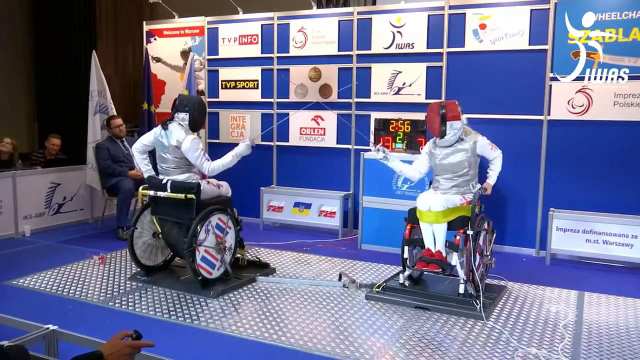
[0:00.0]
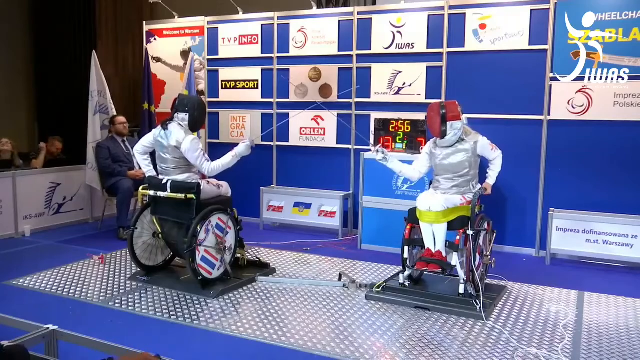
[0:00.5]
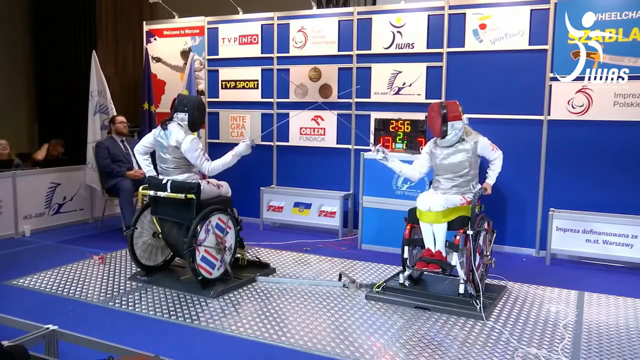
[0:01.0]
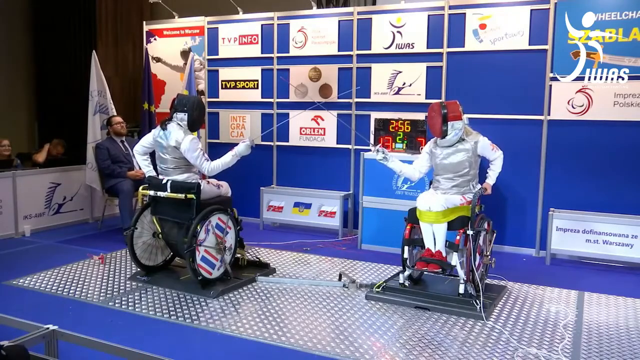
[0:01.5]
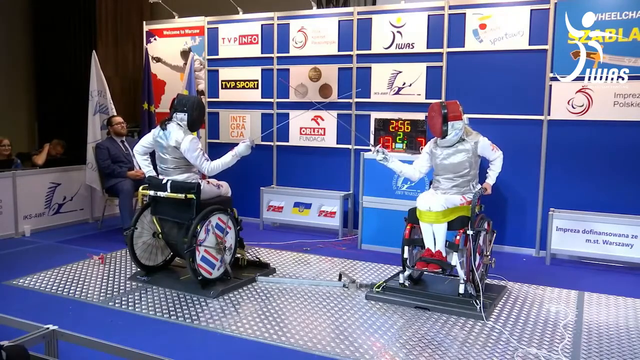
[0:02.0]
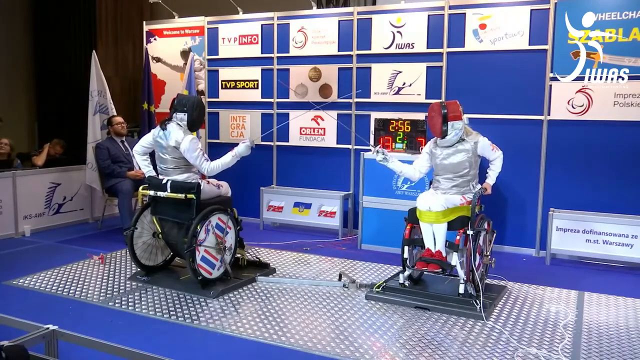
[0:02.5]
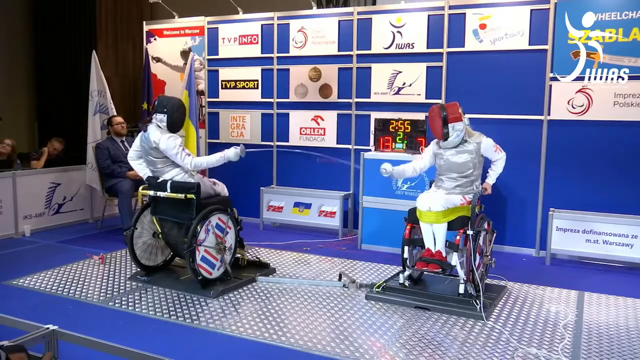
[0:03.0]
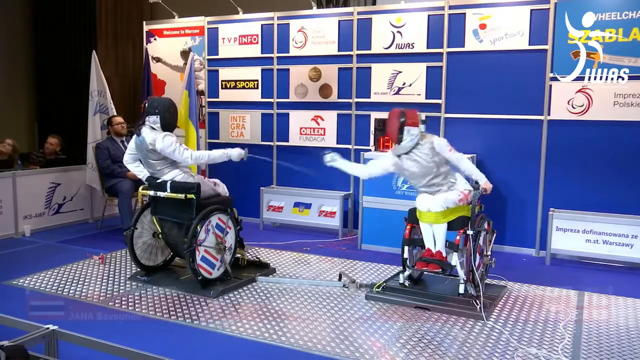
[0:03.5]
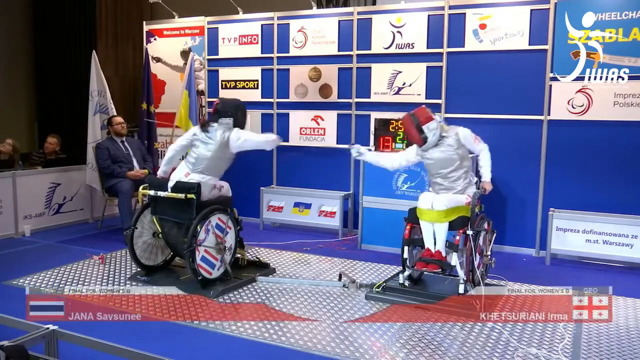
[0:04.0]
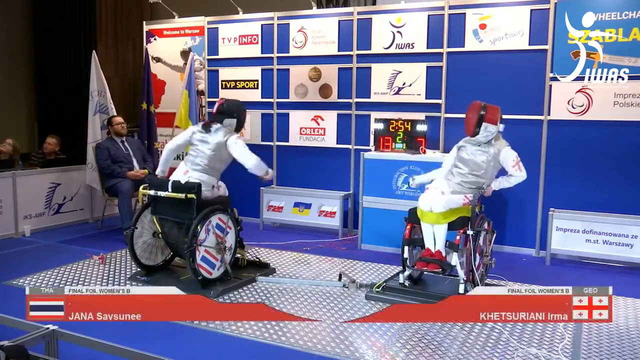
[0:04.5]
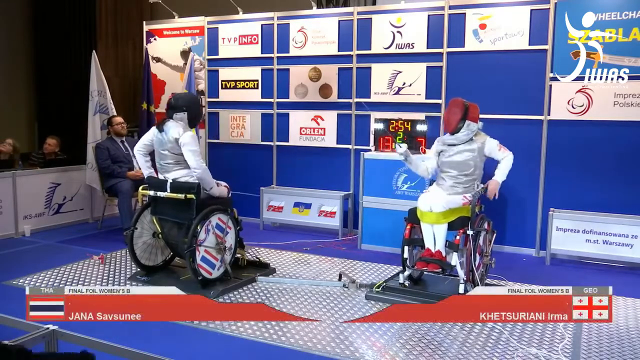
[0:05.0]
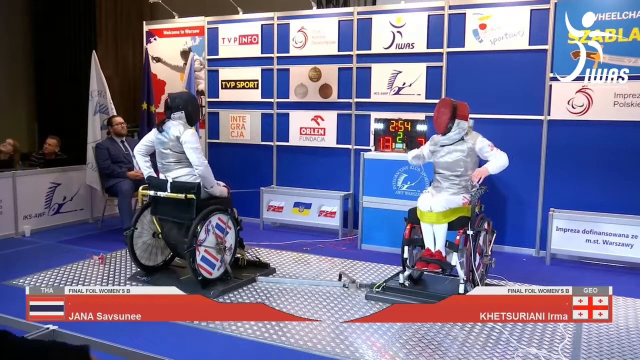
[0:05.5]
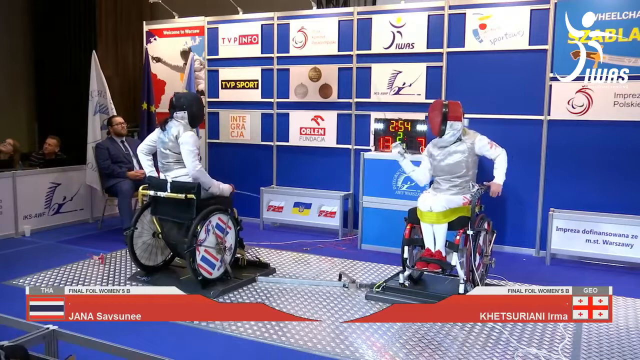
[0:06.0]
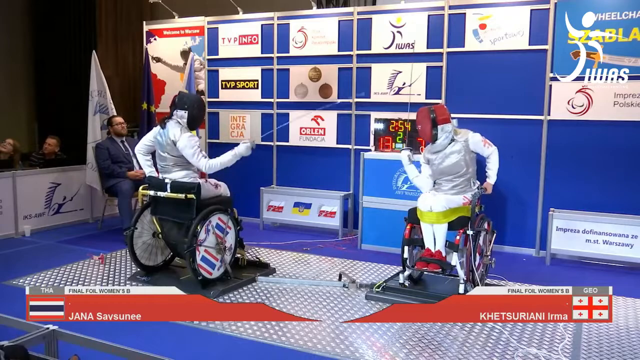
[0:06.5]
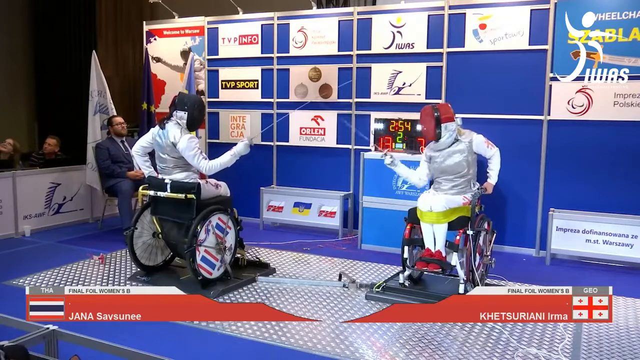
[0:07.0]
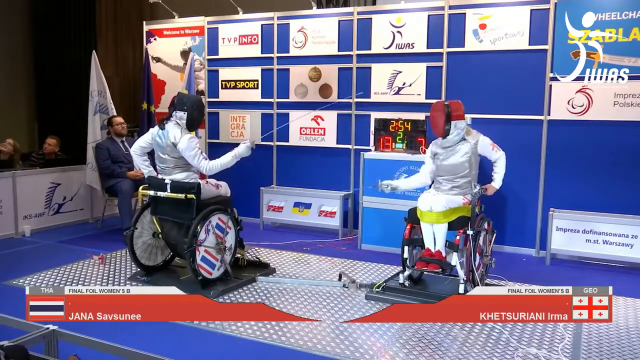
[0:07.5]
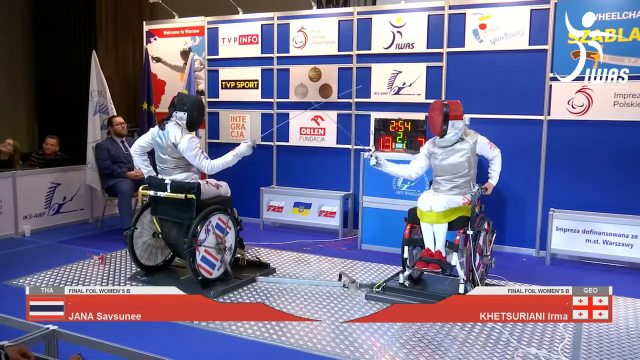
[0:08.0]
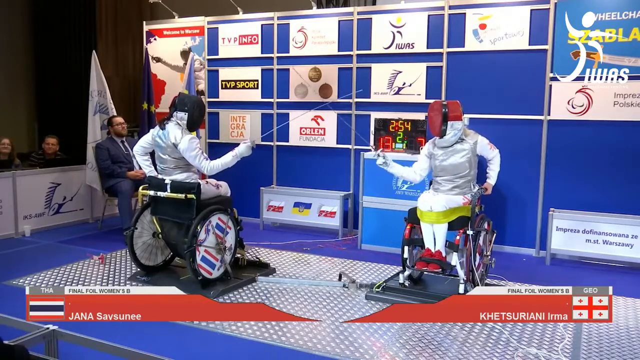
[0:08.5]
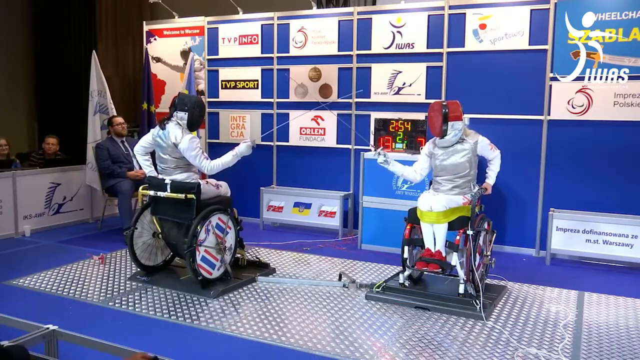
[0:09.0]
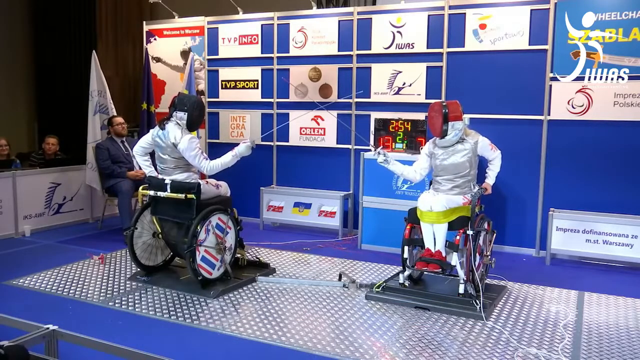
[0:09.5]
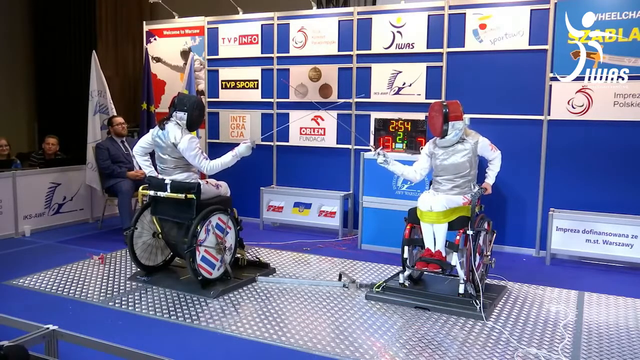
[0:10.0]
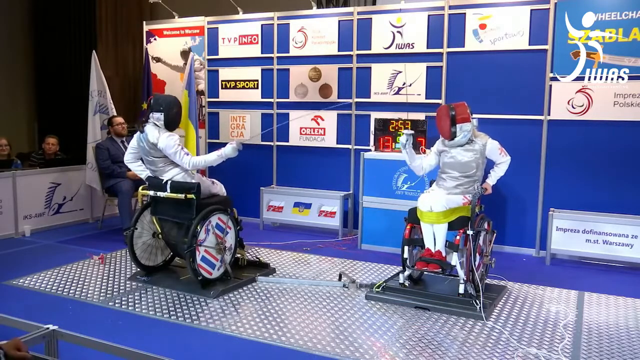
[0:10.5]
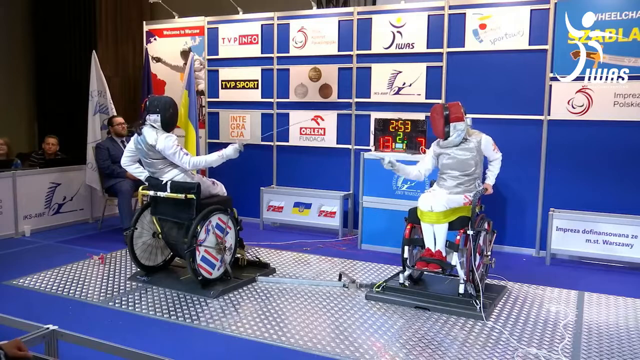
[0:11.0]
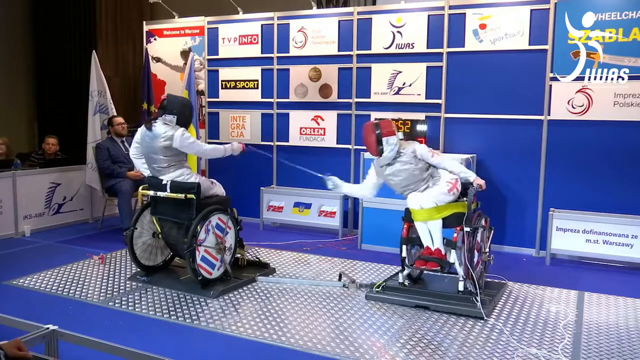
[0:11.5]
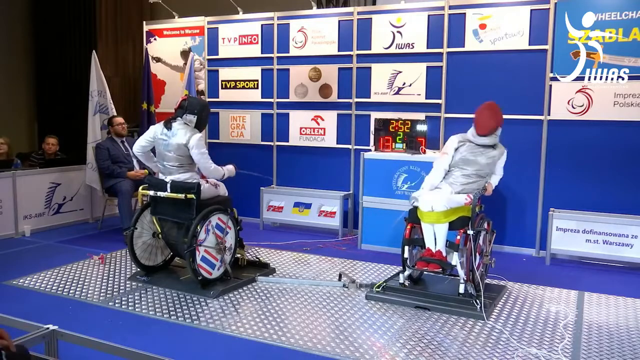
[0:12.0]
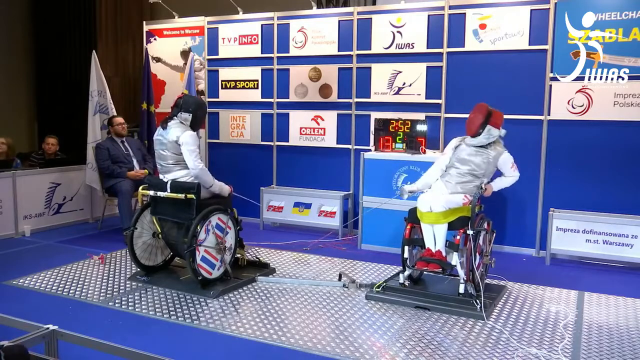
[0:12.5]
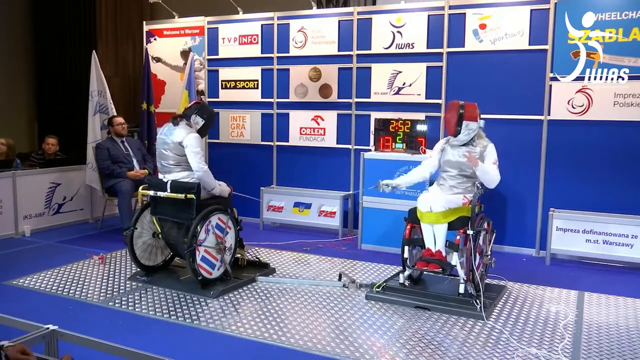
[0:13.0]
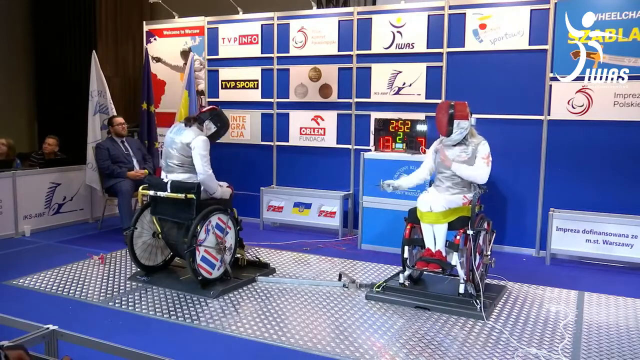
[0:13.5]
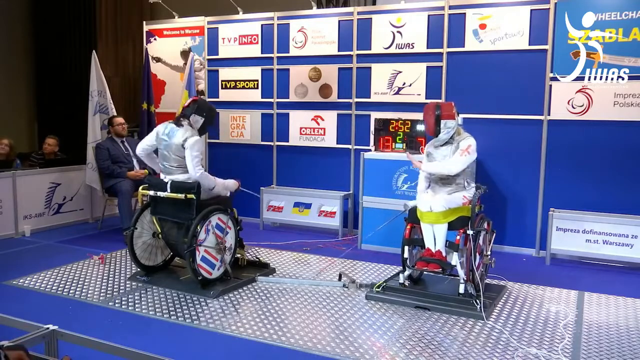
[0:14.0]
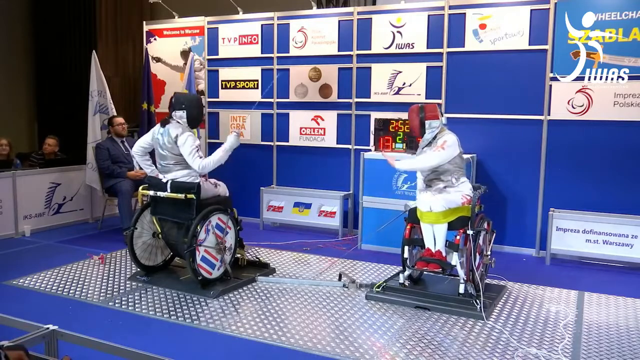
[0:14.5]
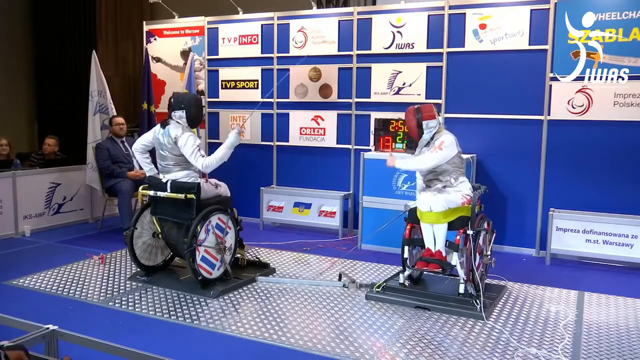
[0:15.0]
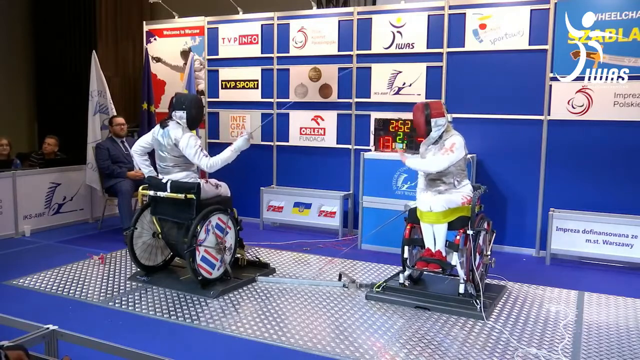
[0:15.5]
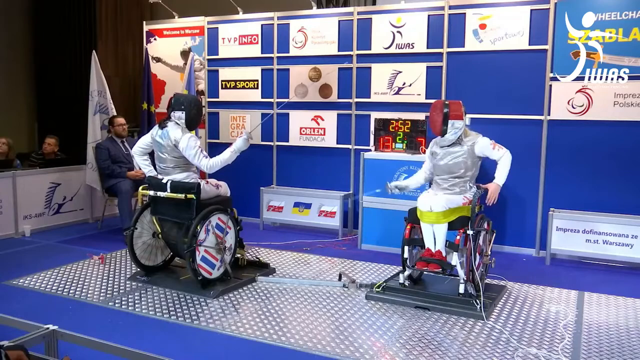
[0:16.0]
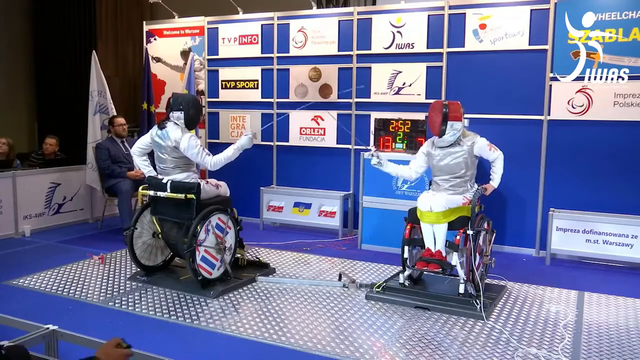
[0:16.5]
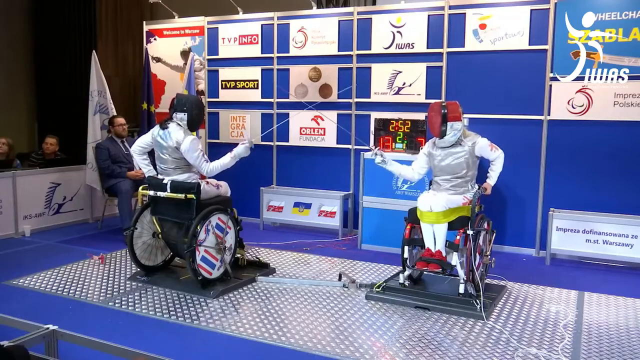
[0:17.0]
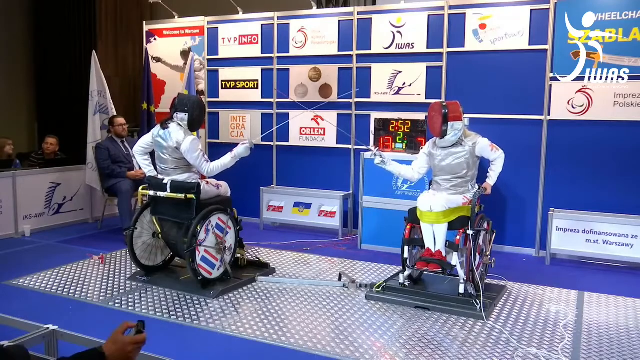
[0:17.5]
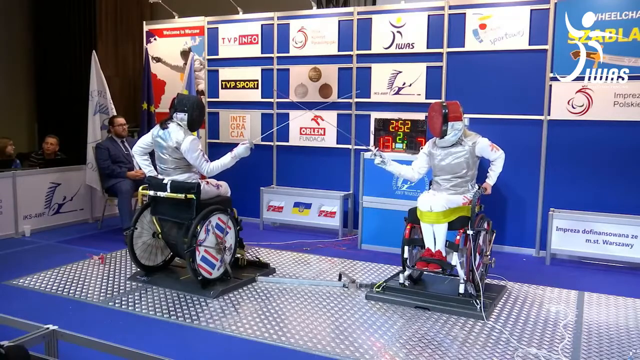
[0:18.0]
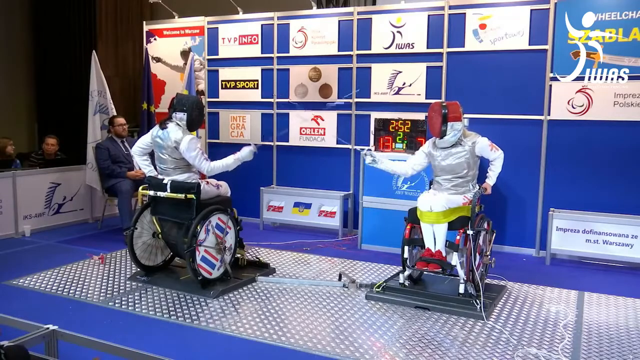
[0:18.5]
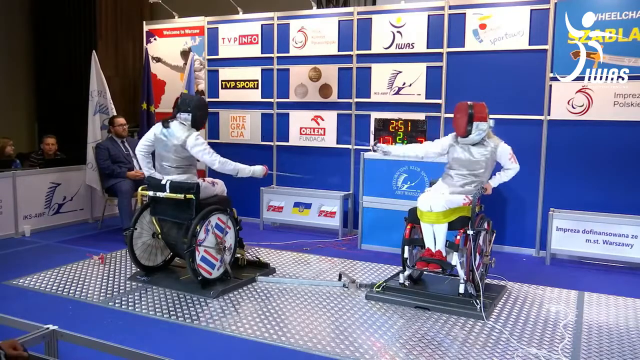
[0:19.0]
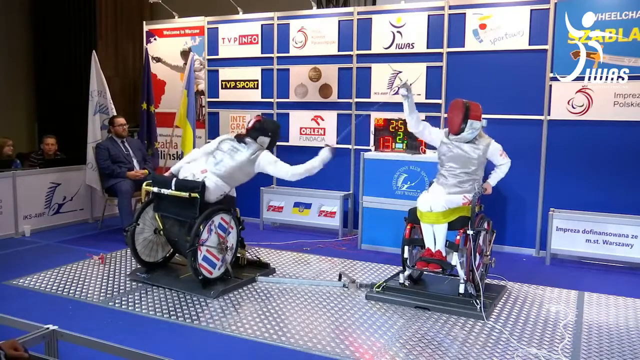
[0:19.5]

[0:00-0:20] Two people are fencing while sitting in wheelchairs, one on the right and one on the left. The person on the right faces the camera and the person on the left faces away; each holds a fencing sword in their right hand. The person on the right makes an attack, and then they put their swords together; it looks like the person on the right attacked the person on the left. They put their swords together to form an X, the person on the right makes a move, they form the X again, and the person on the right makes another move and hits the person on the left. In the background, a judge is standing in the corner on the left side, with a white flag behind him. Two people at the far left are sitting in the stands, watching the event. The person on the right has straps around their knees, above their feet.